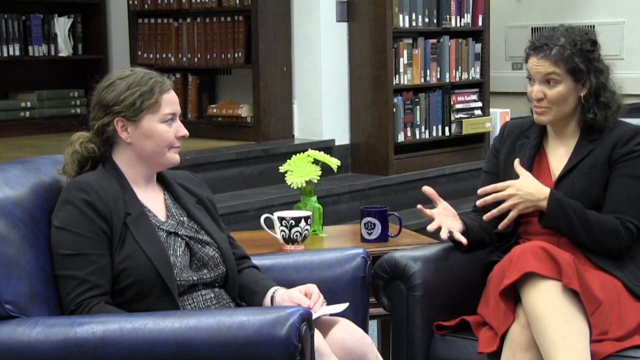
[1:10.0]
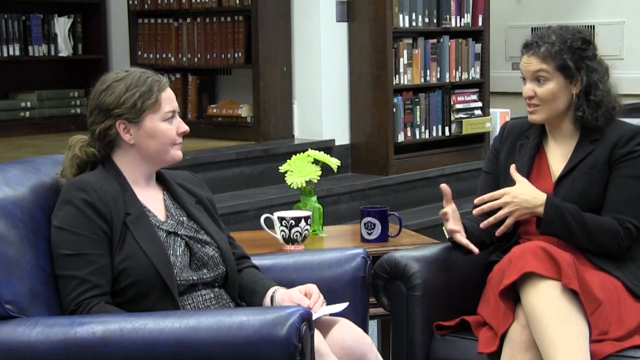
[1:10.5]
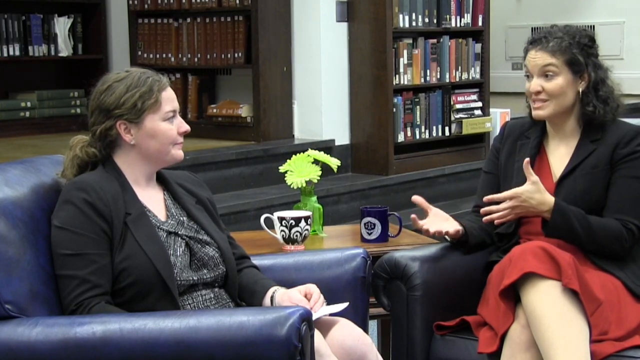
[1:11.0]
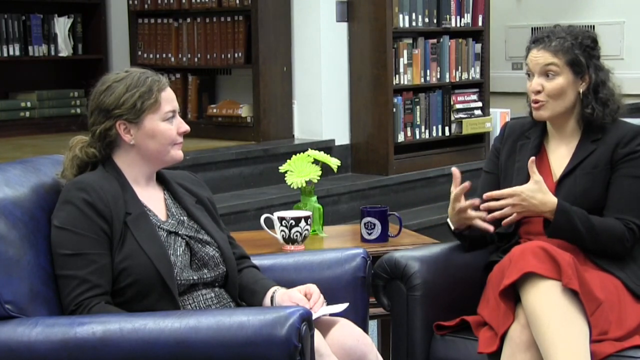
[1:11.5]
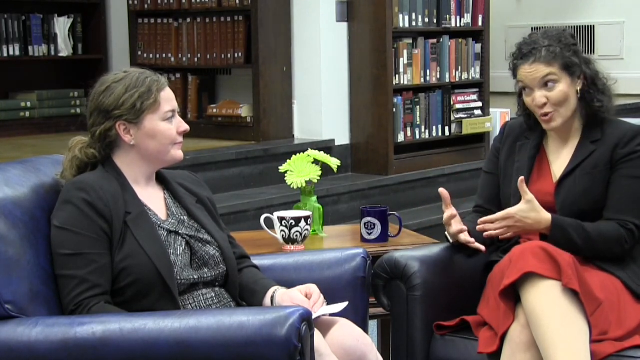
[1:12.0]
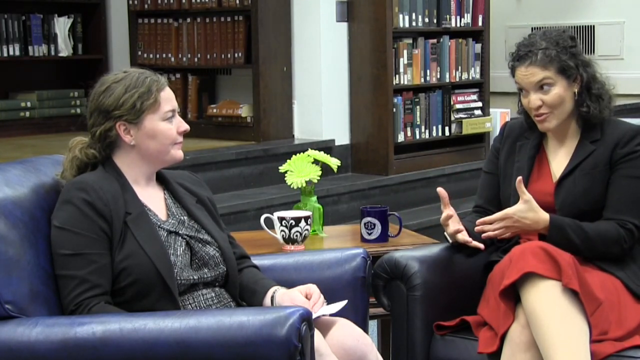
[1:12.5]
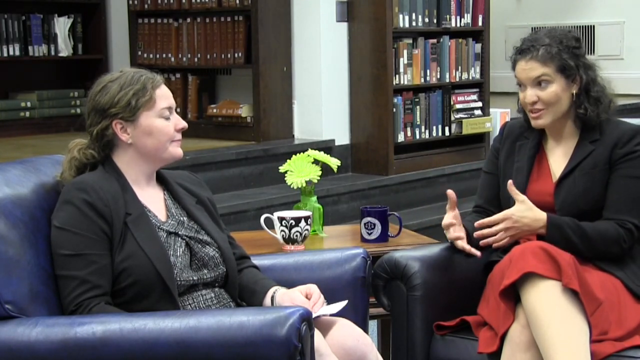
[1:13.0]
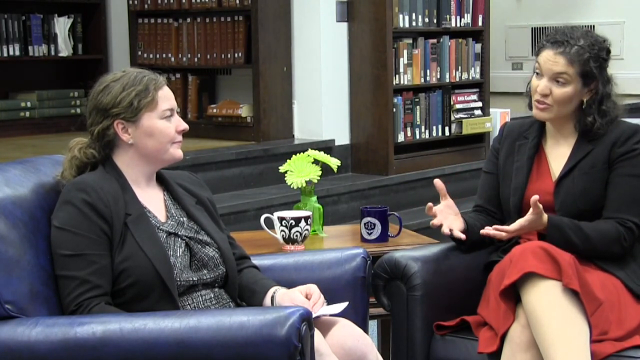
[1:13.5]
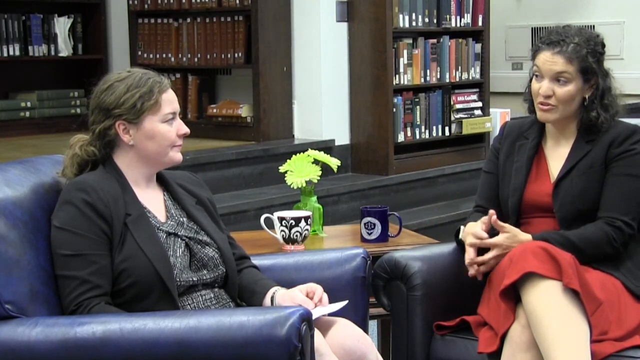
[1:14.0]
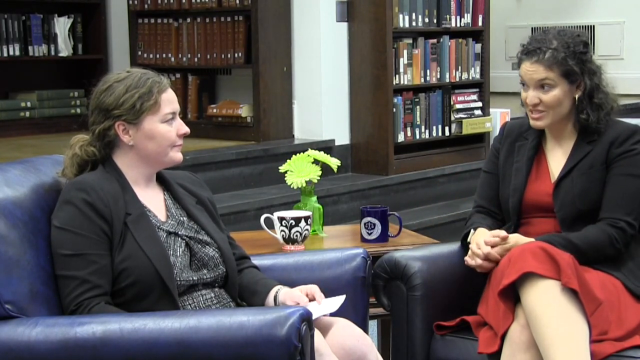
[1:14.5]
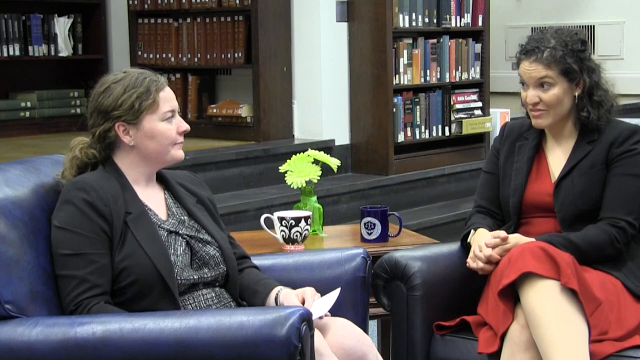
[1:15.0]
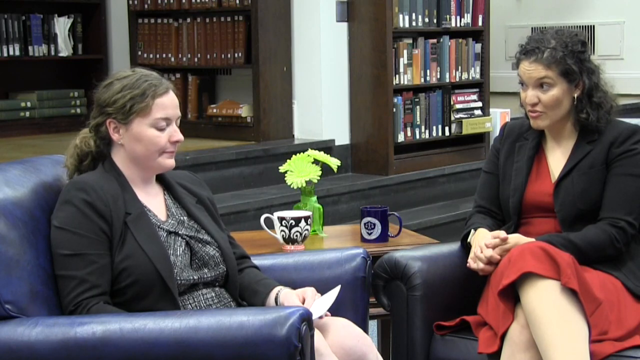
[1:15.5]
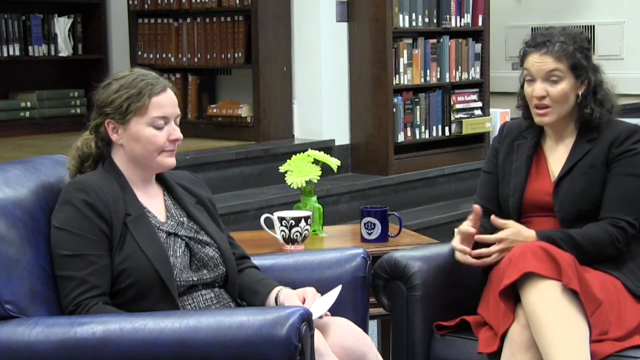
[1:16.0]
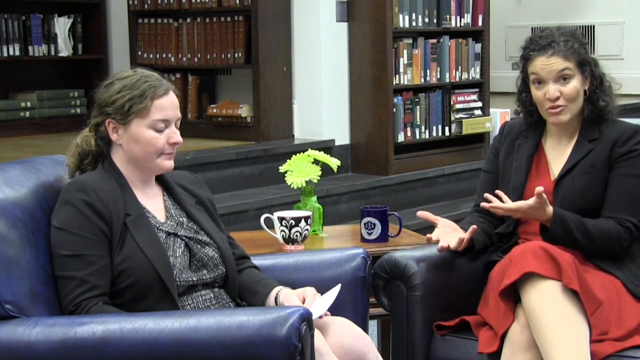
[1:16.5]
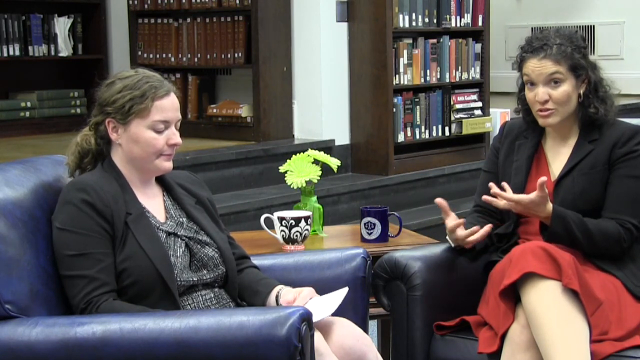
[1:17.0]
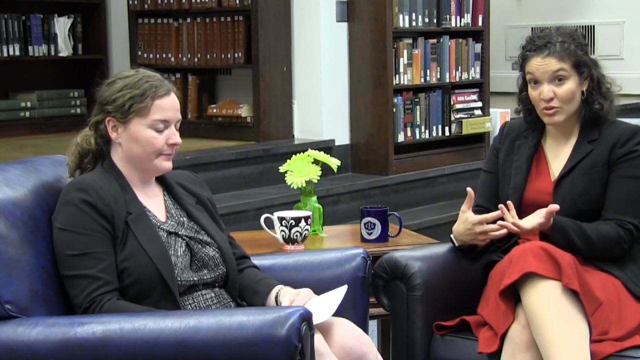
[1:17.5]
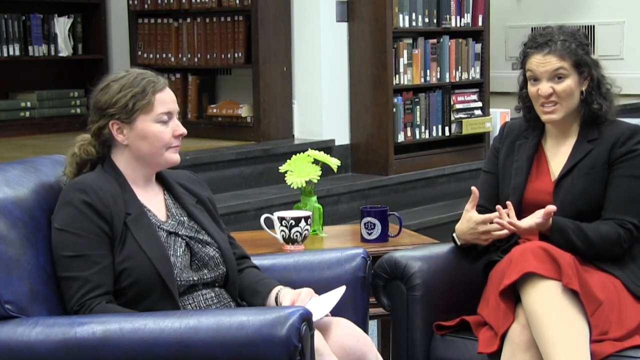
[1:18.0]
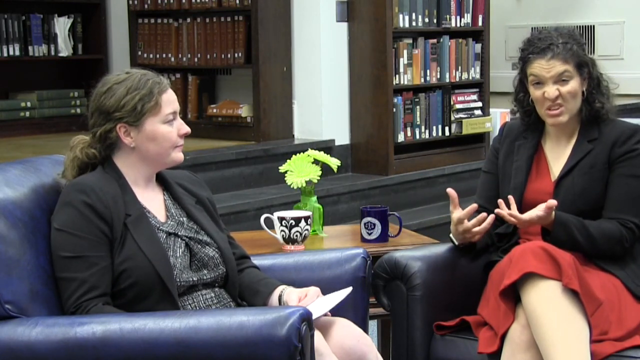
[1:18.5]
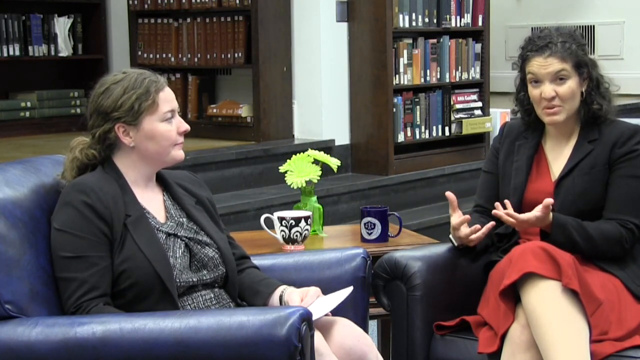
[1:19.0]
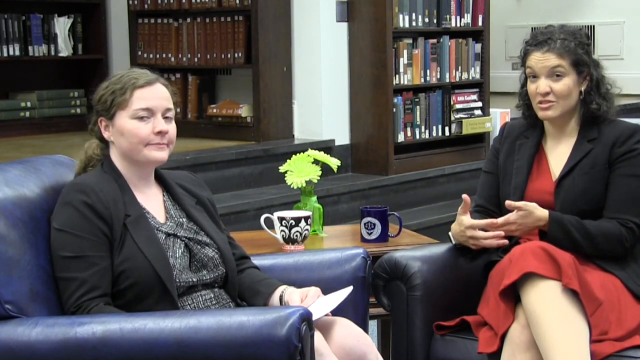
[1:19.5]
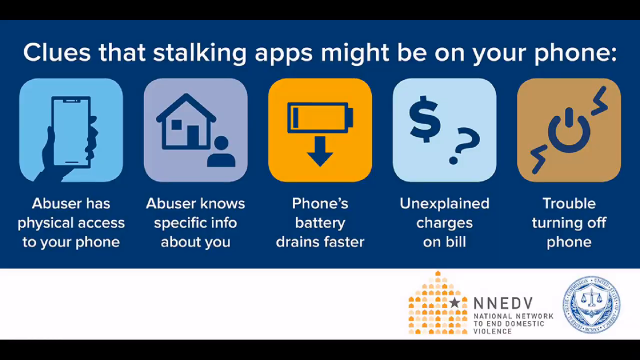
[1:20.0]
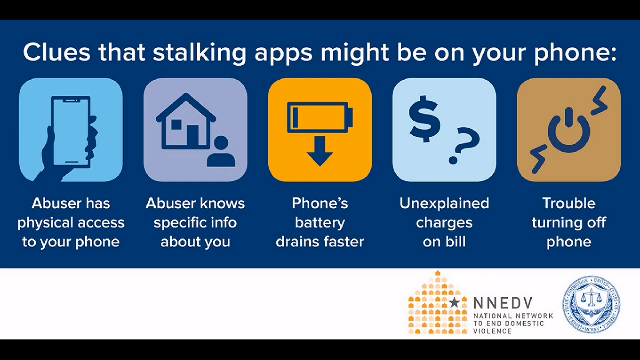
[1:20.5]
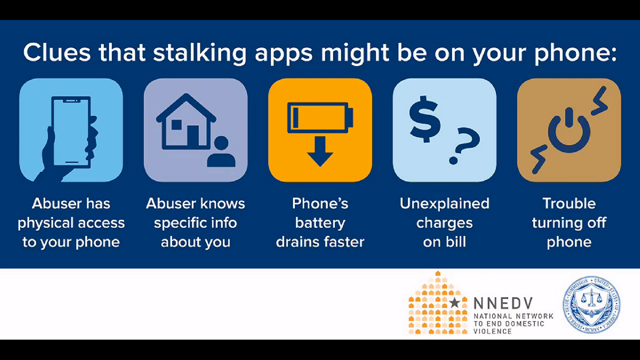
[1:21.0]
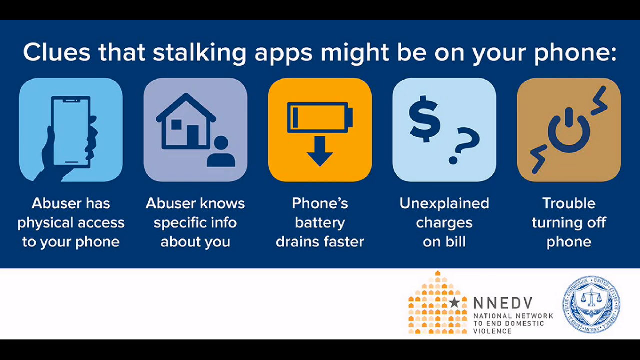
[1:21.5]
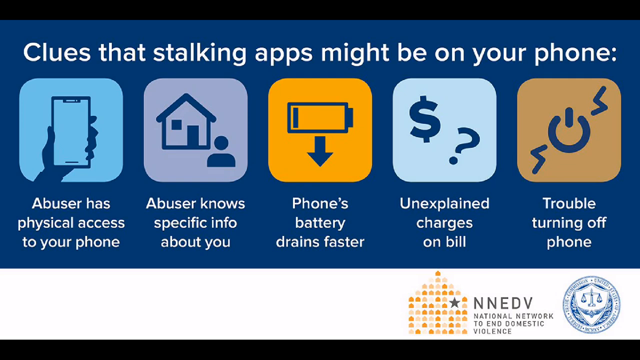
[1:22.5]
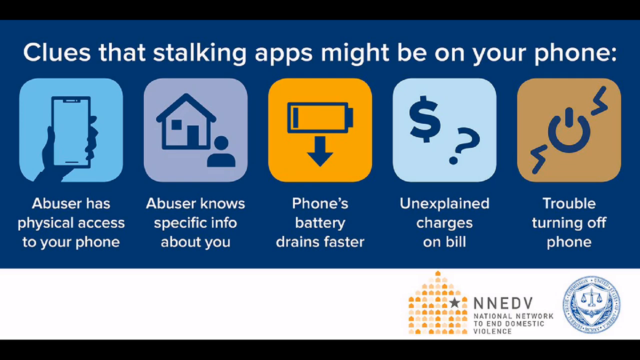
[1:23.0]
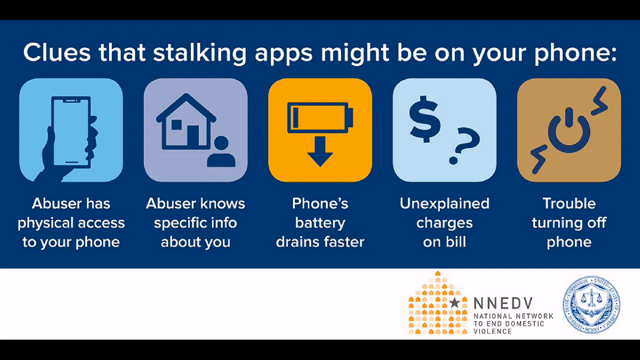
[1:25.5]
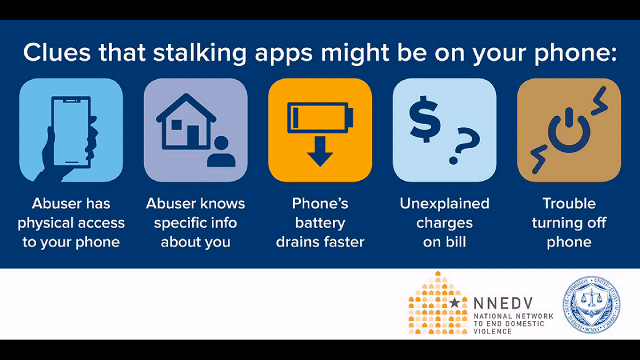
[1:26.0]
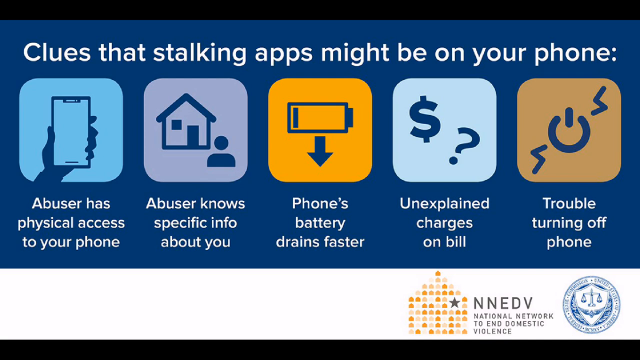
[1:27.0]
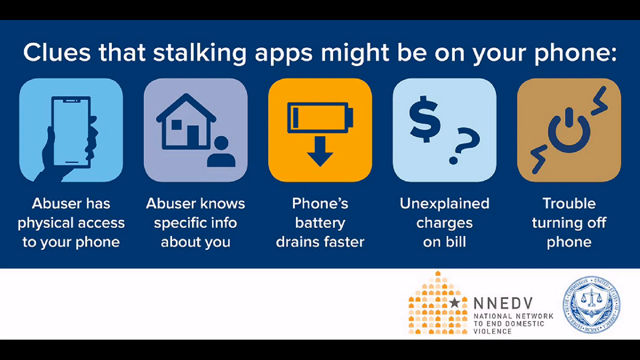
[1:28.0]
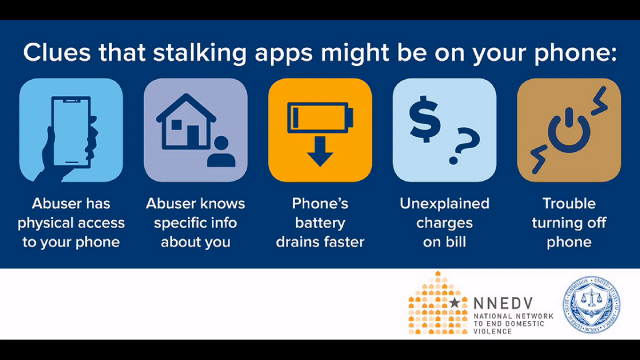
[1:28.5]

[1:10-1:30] The two women are still sitting and continuing their conversation, with hand movements back and forth and eye contact; one appears to be explaining something to the other. On-screen text shows clues that stalker apps might be on a phone, including charges on the bill and the phone battery draining faster.